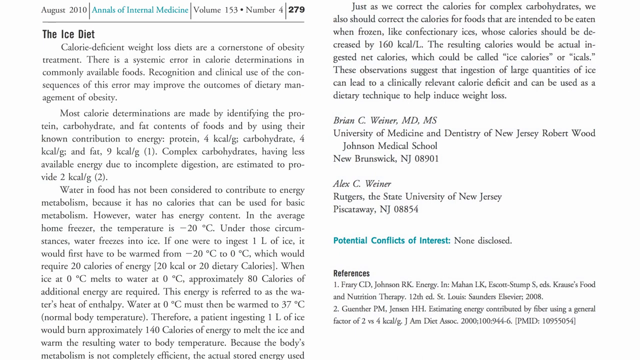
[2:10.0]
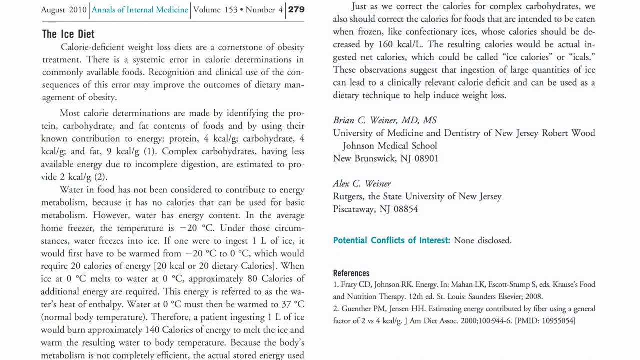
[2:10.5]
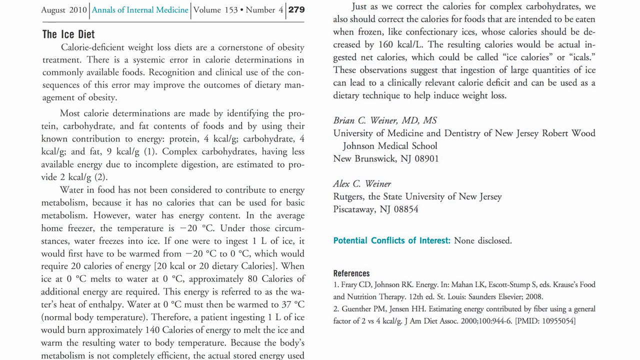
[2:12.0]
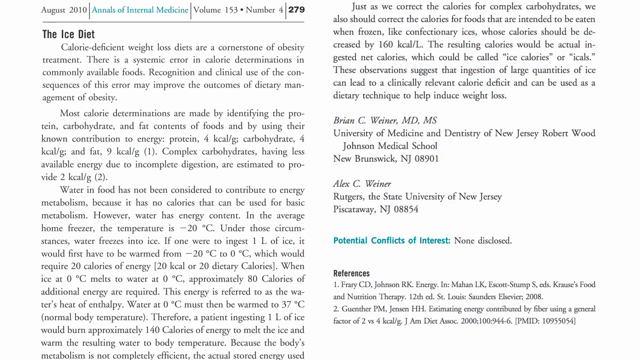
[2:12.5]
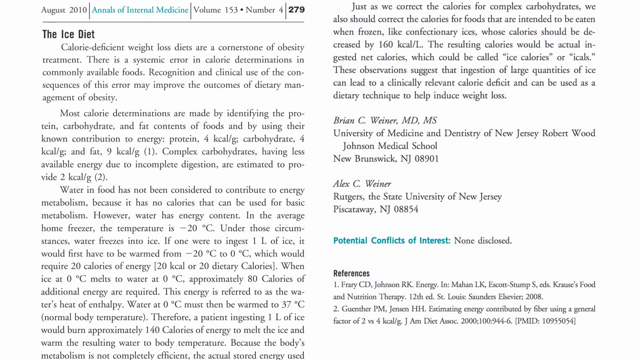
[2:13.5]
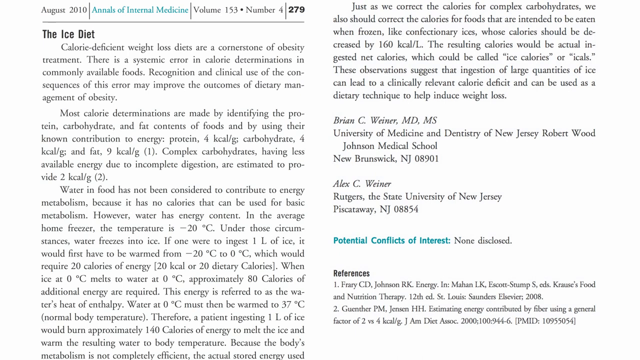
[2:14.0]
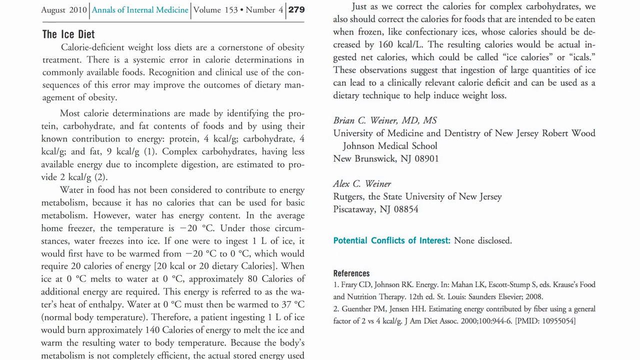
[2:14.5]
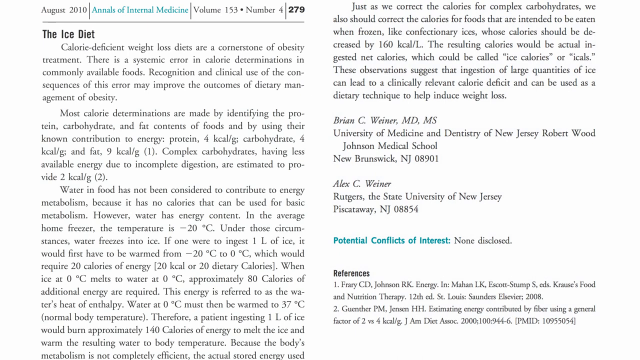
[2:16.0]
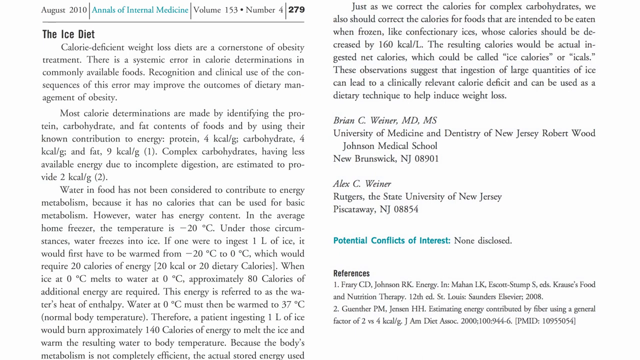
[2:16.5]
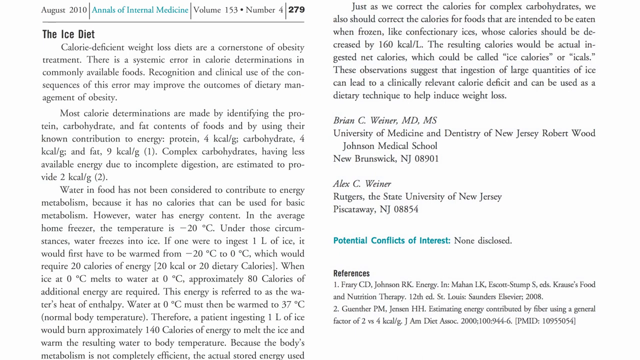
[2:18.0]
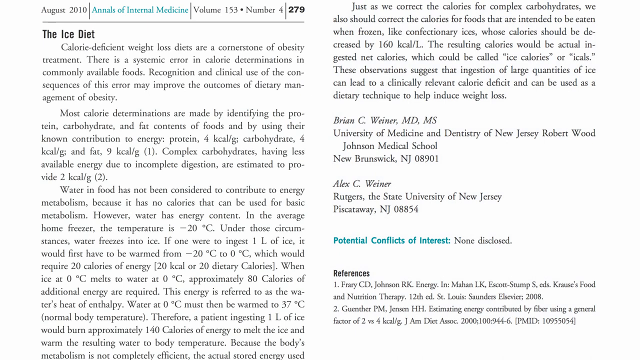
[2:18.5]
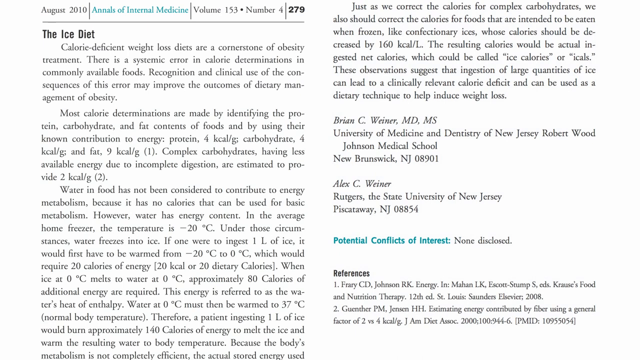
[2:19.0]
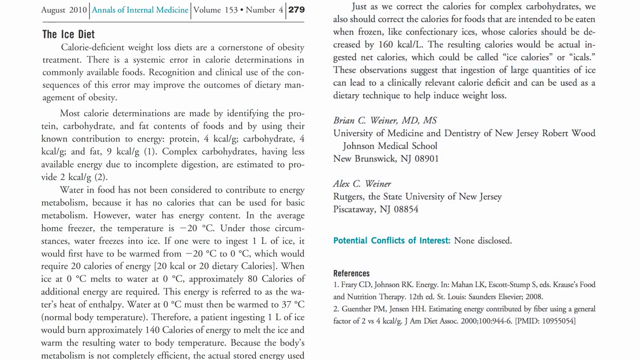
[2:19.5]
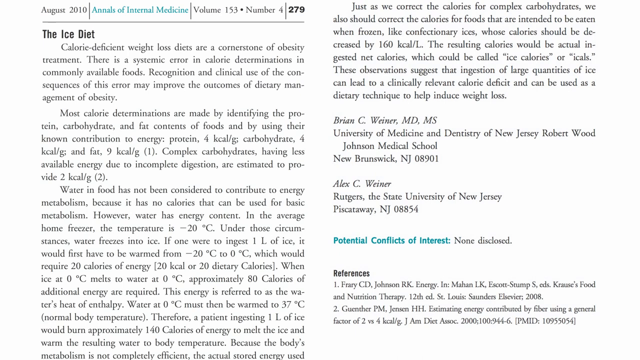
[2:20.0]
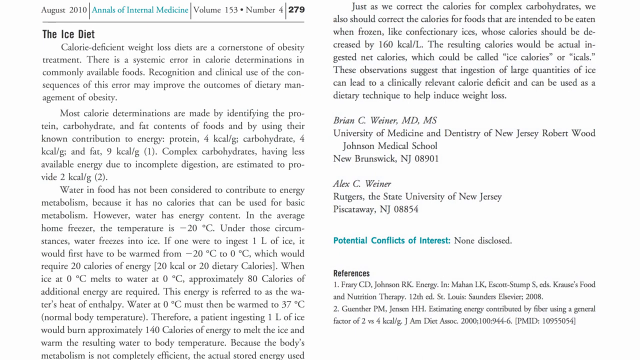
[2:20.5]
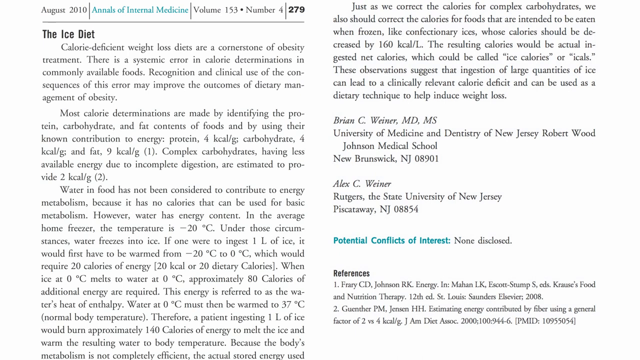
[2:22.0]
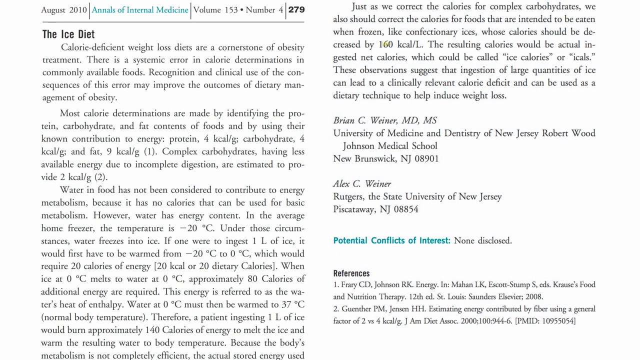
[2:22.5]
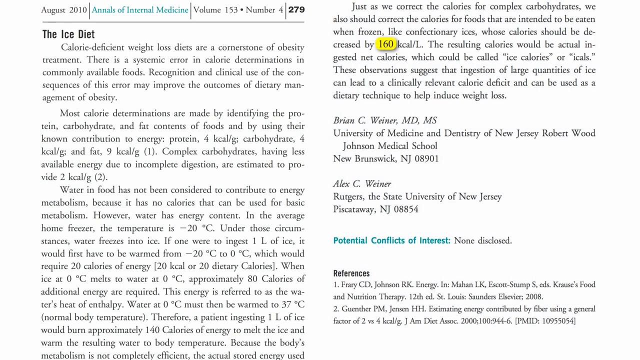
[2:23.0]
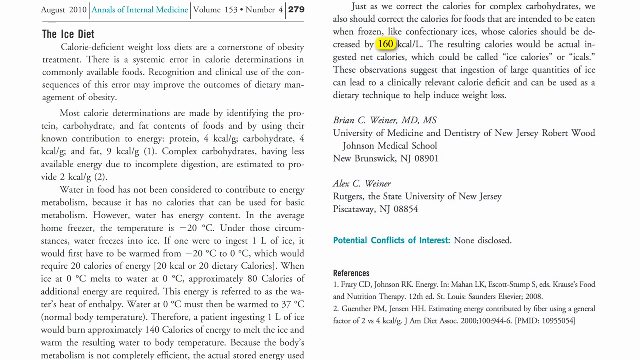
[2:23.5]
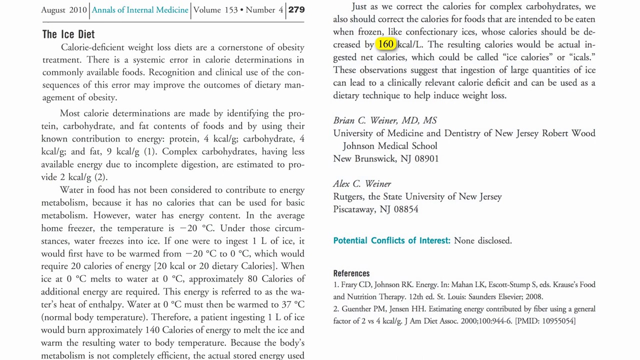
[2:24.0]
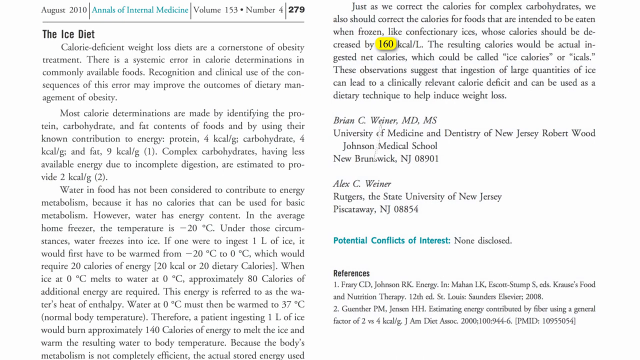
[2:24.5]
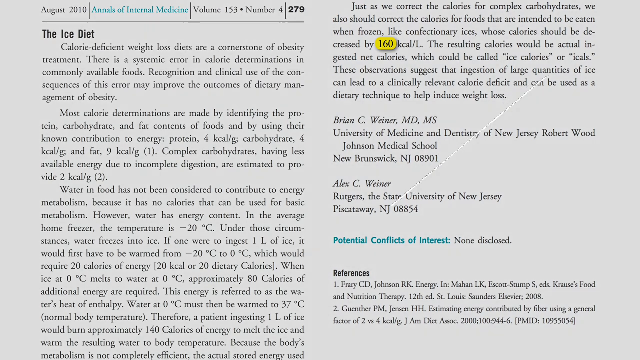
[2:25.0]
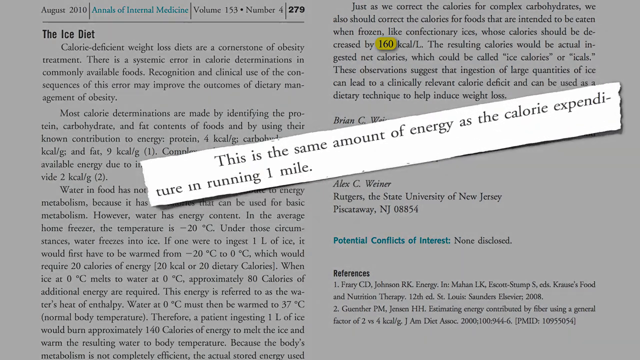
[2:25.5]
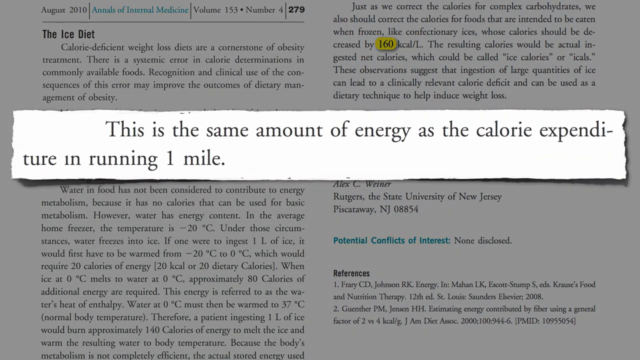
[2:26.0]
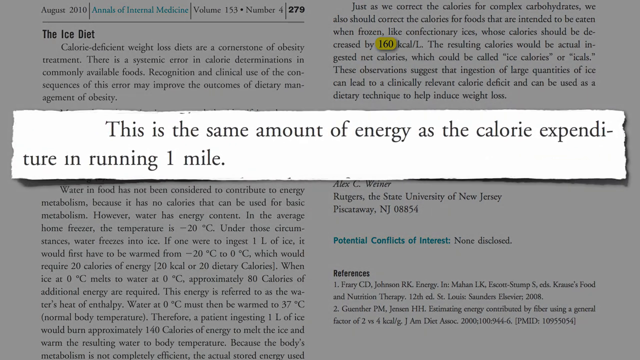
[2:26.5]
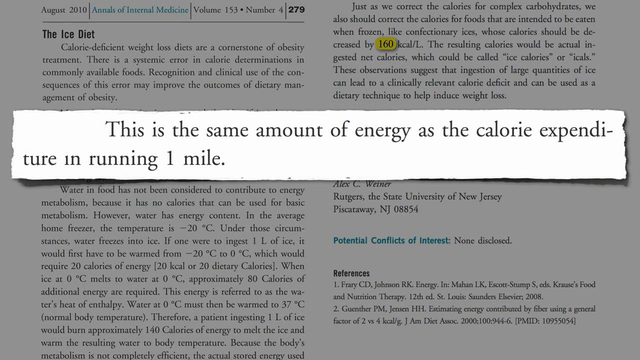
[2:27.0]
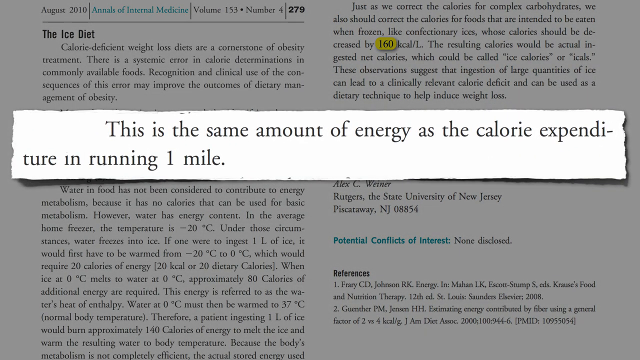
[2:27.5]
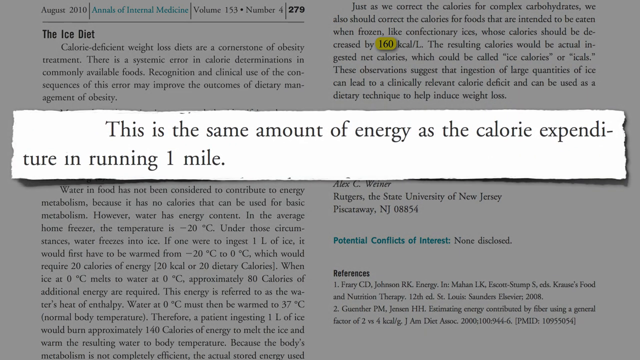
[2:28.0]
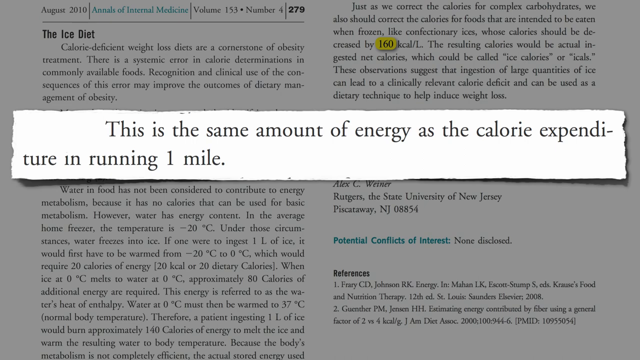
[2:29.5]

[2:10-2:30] Black text on a white background reads "the ice diet," continuing "calorie deficient weight loss diets are a cornerstone of obesity treatment. There is a systemic error in calorie determinations in commonly available foods. Recognition and clinical use of the consequences of this error may improve the outcomes of dietary management of obesity." It goes on: "most calorie determinations are made by identifying the protein, carbohydrate, and fat contents of foods, and by using their known contribution to energy," followed by energy values for protein, carbohydrate and fat, including "fat, 9 kcal," and a line beginning "Complex carbohydrates having less available energy." At the very top left of the screen is "August 2010, Annals of Internal Medicine, Volume 153, Number 4, 279."